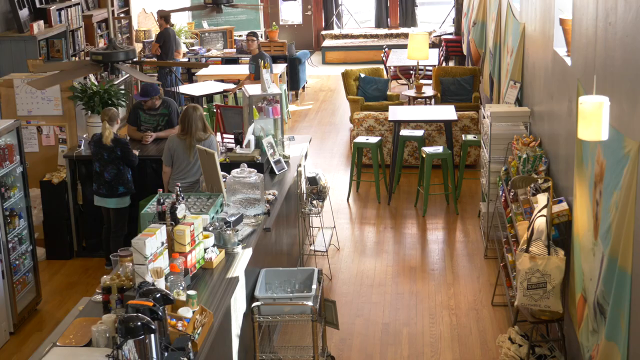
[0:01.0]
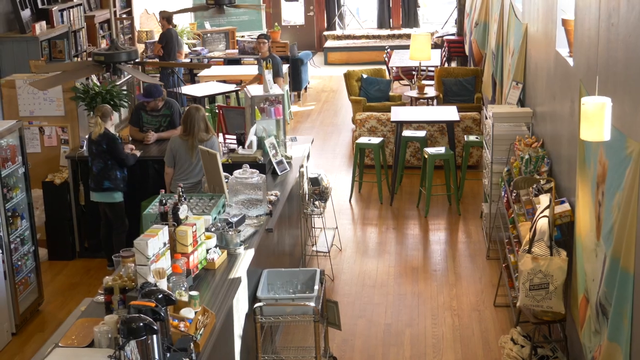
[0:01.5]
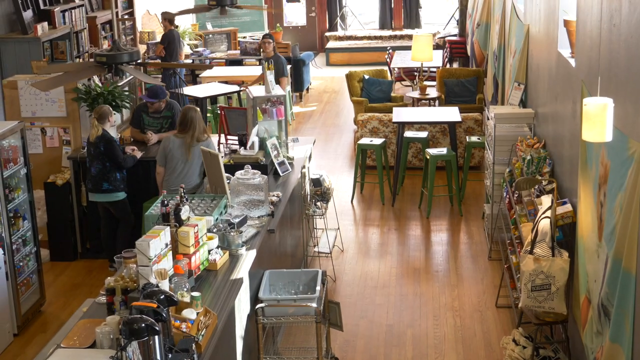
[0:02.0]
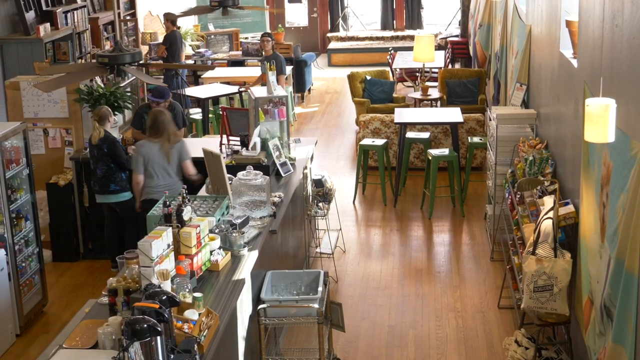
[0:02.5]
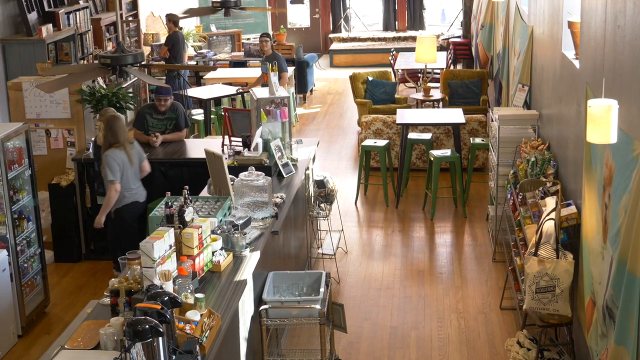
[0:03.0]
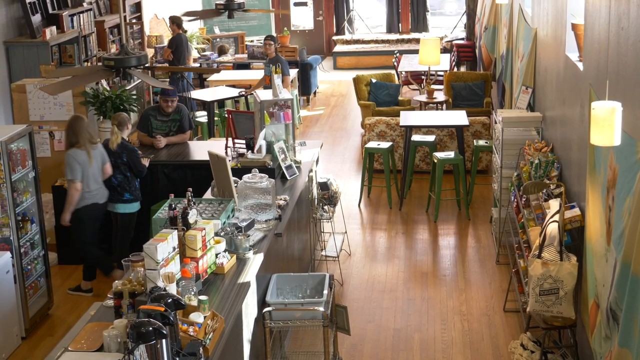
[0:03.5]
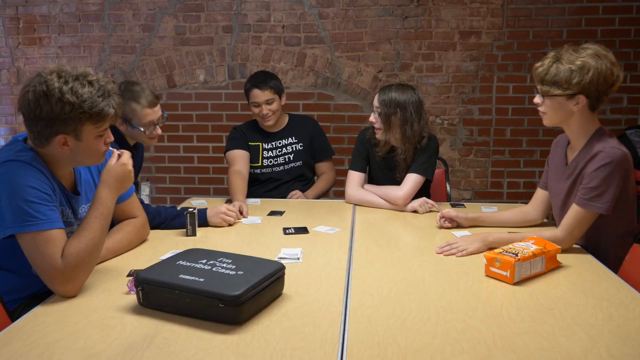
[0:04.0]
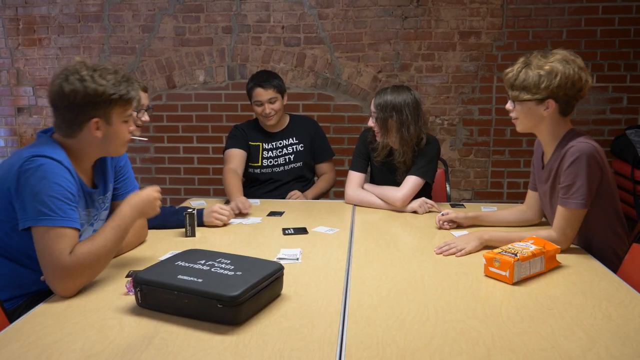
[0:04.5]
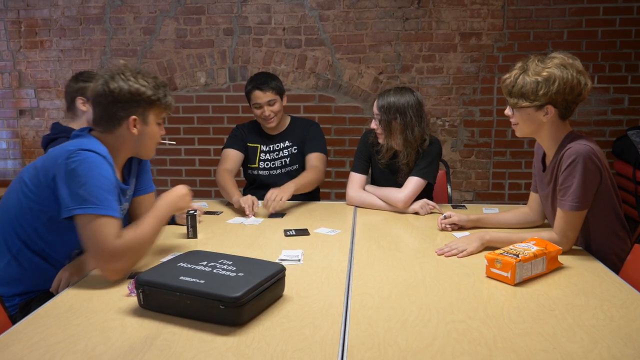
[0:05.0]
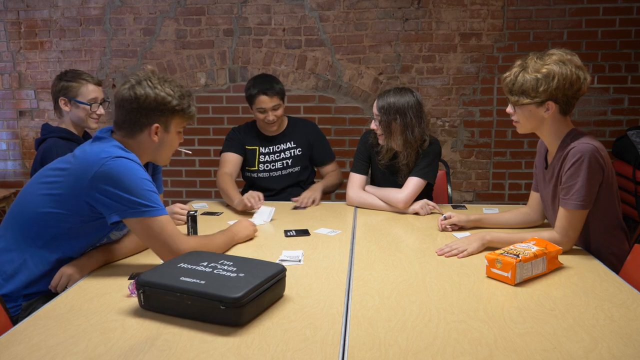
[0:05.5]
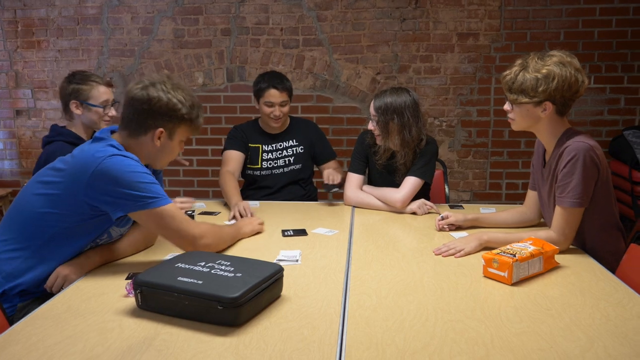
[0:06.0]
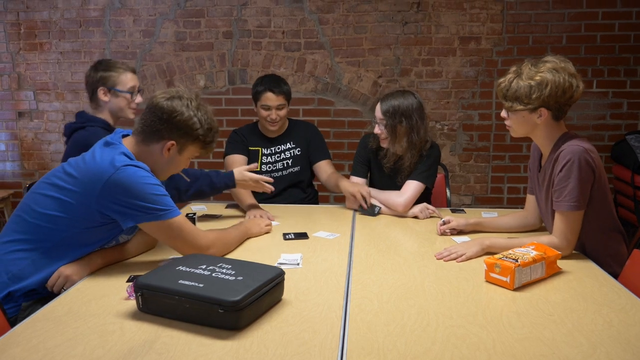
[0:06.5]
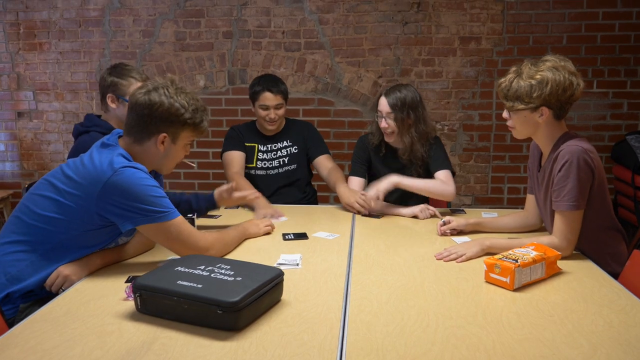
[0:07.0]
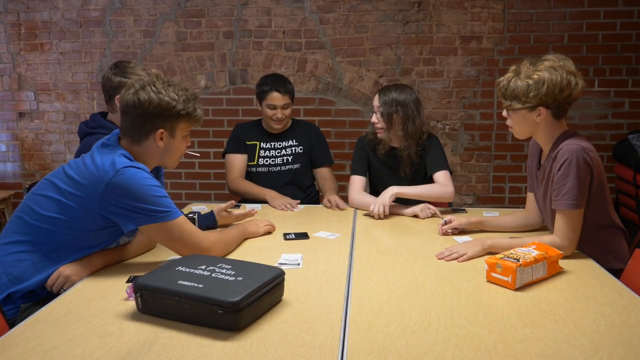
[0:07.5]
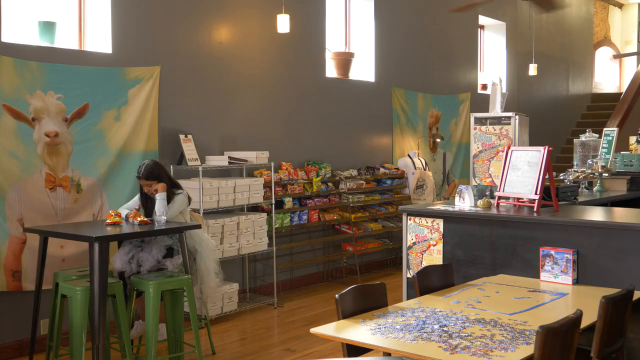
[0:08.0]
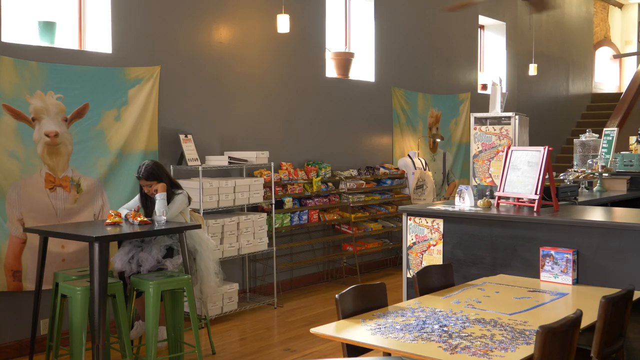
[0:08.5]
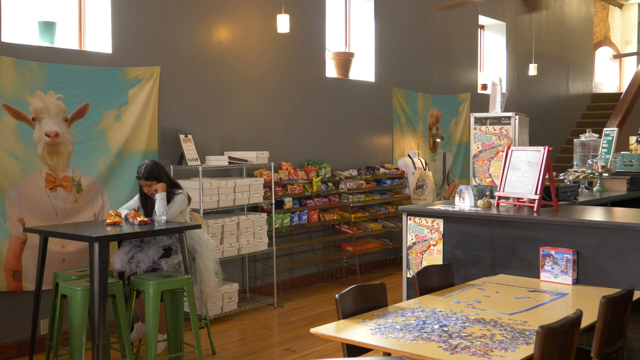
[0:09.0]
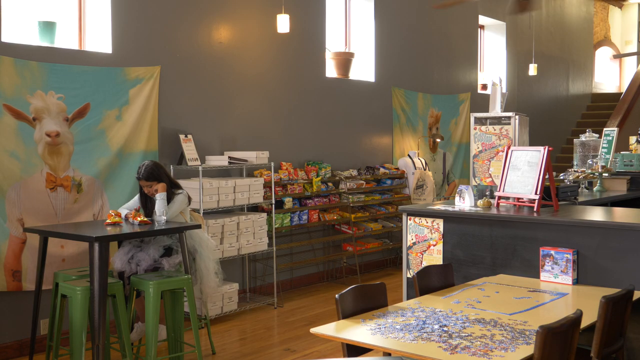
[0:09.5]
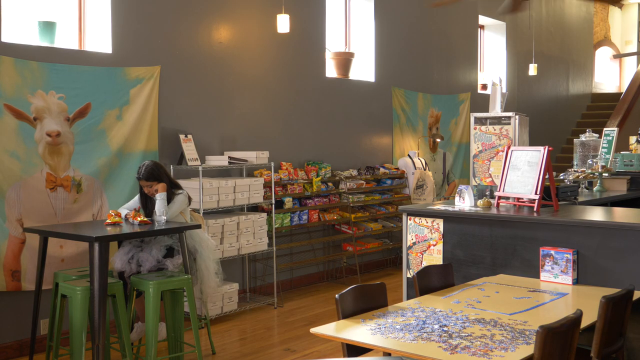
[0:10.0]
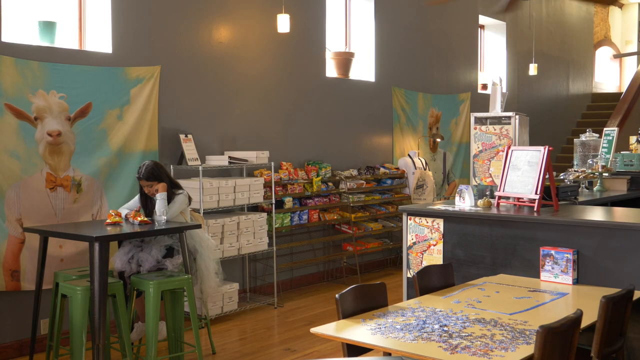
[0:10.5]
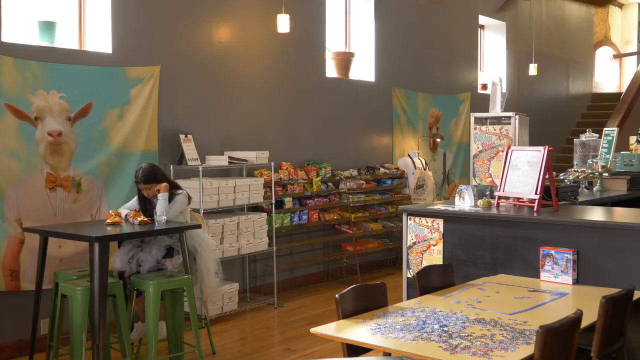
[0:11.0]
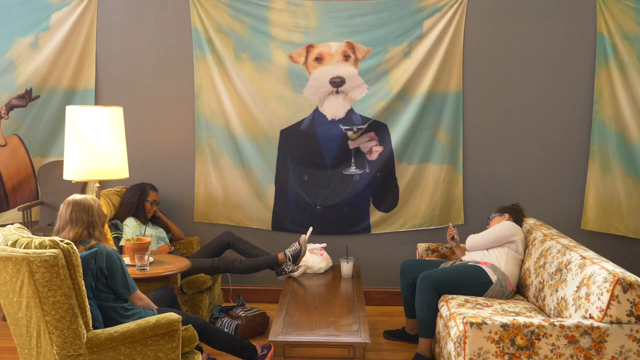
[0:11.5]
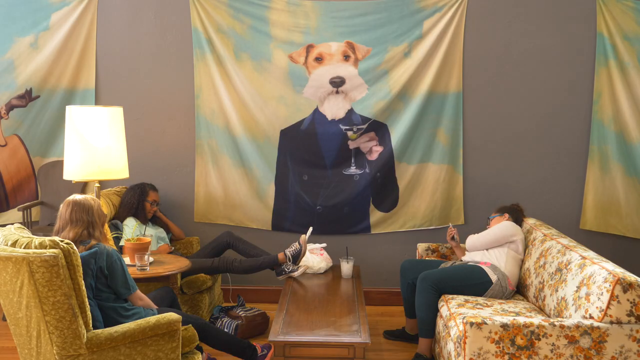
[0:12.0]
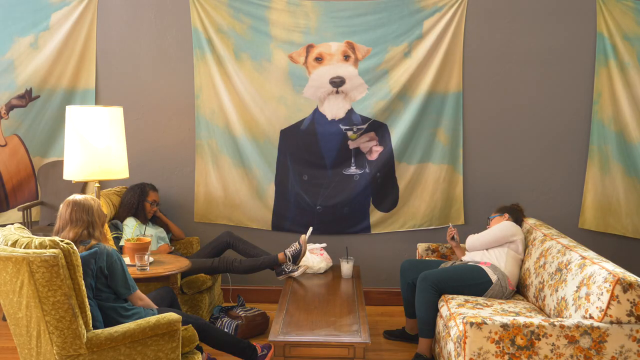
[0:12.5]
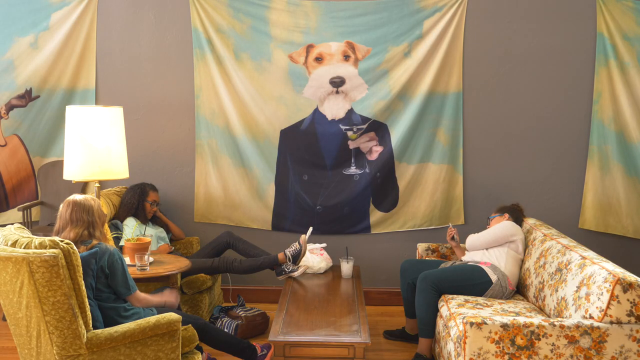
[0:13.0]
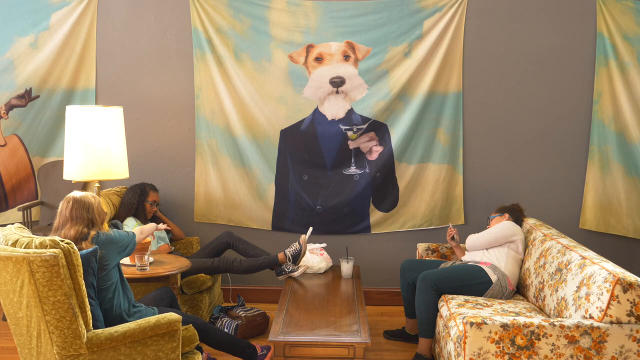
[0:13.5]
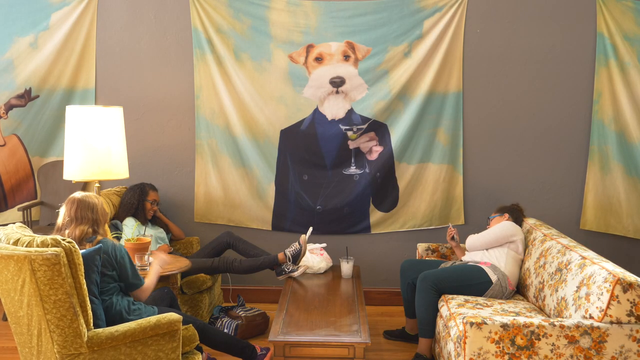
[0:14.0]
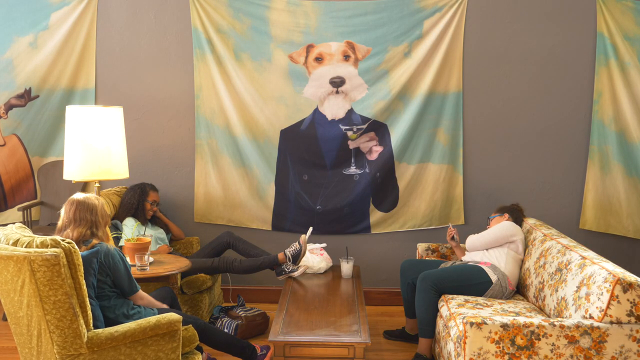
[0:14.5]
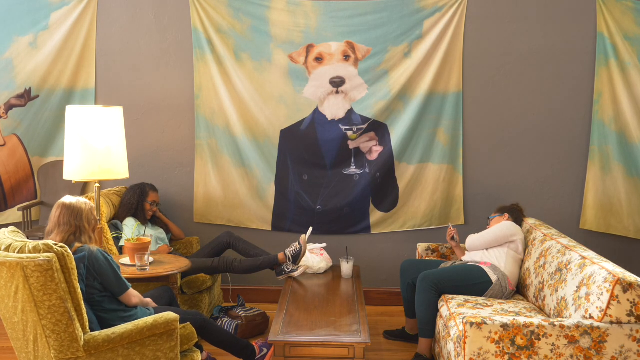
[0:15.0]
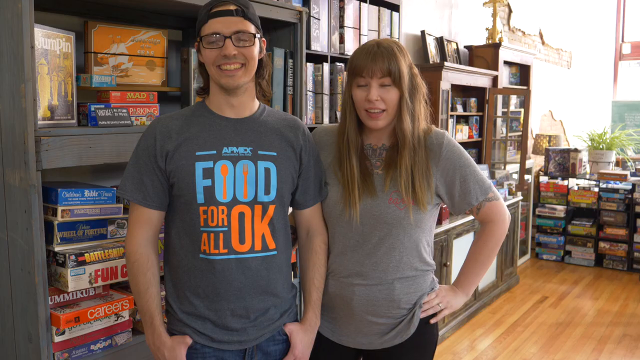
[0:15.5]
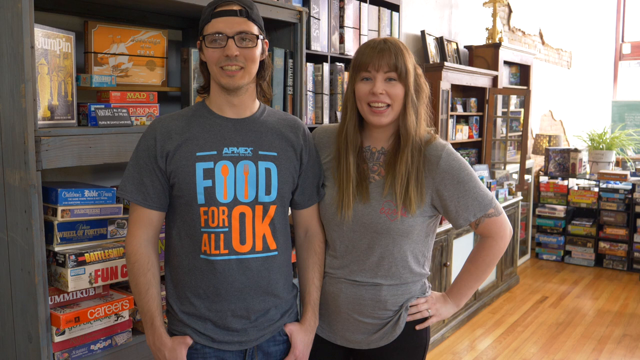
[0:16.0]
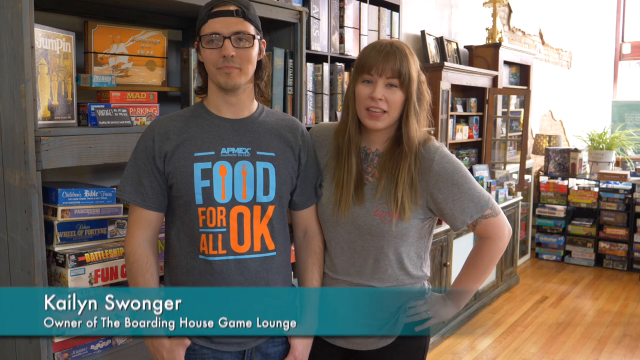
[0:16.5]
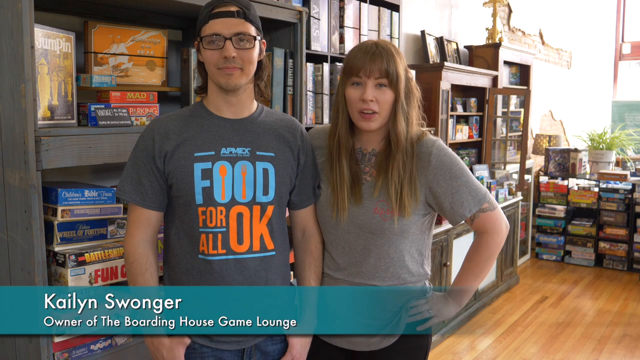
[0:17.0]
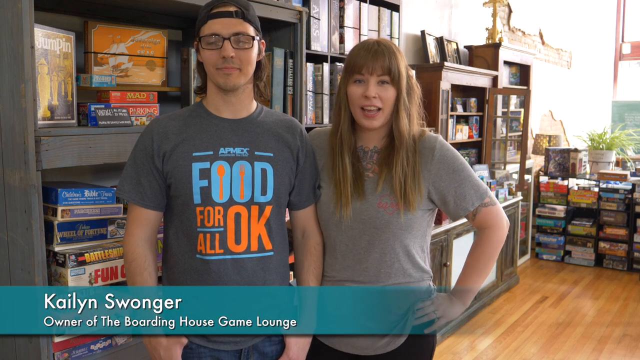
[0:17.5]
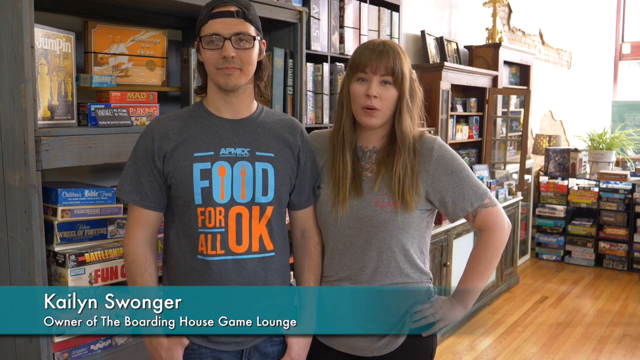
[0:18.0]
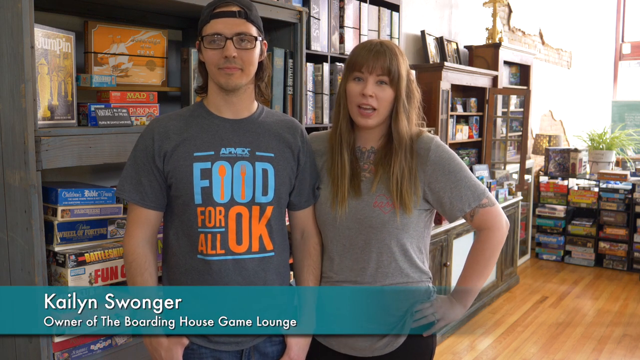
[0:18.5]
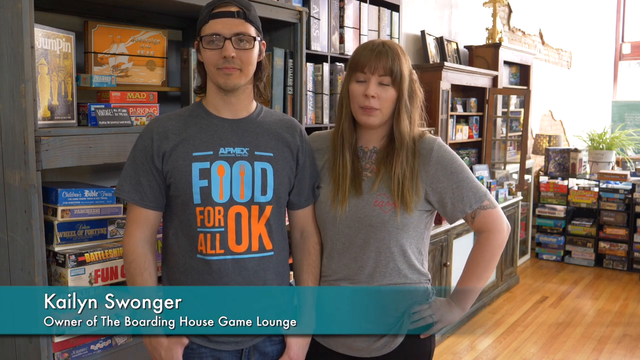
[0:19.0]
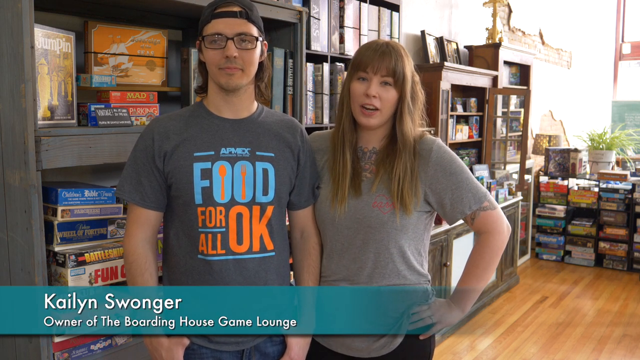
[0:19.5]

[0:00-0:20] A cafe-type setting, apparently some sort of coffee cafe, is about half full with people. Two women are behind the register area, and the counter is full of different items; one of the women walks away. The scene cuts to a group of young people, who look like teenagers, sitting at a square-shaped table playing some sort of card game. One of them, a male wearing a National Sarcastic Society t-shirt, appears to be dealing the cards. Next, a woman sits alone at a table in a cafe area, with a lot of snacks on a metal rack behind her. Her left hand is propped up against her cheek, and she appears to be reading something on the table in front of her. Several green stools surround her table. Then the scene cuts to a group of friends sitting around on chairs and couches, with a cloth towel or sheet hanging down that has a dog holding a martini glass printed on it.